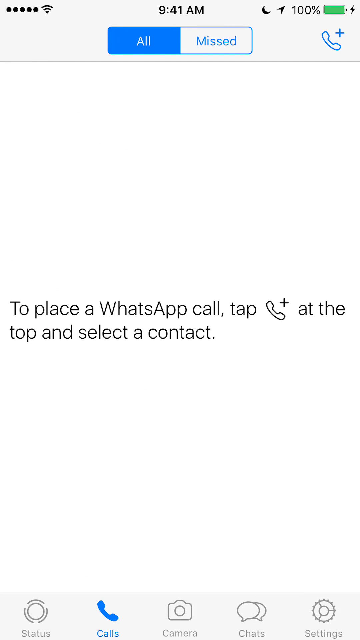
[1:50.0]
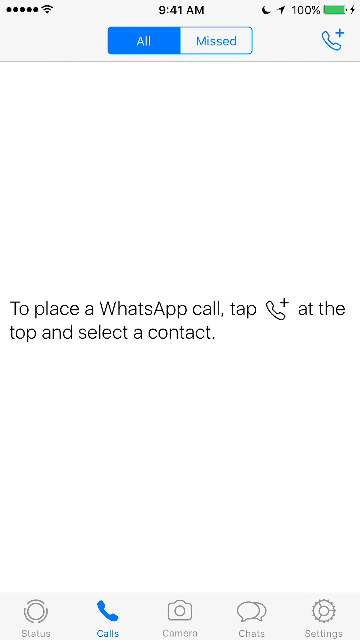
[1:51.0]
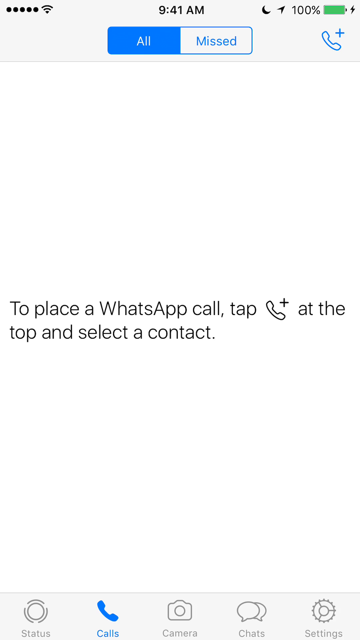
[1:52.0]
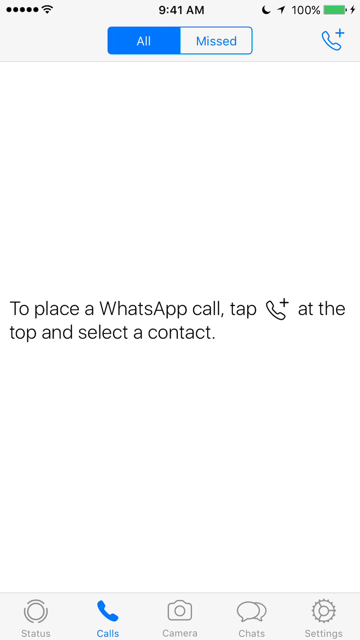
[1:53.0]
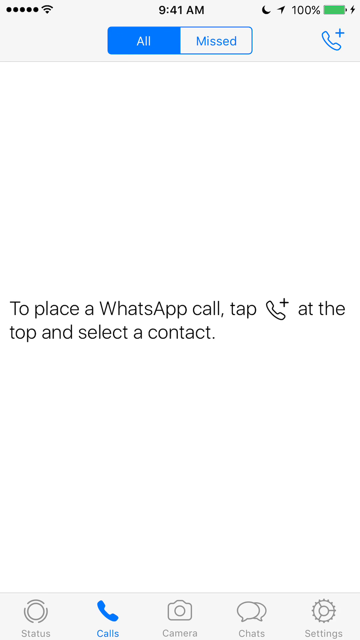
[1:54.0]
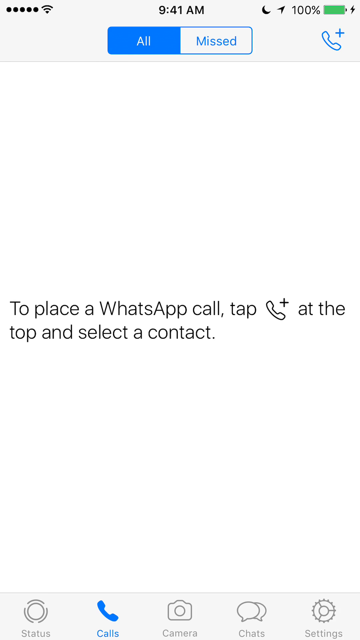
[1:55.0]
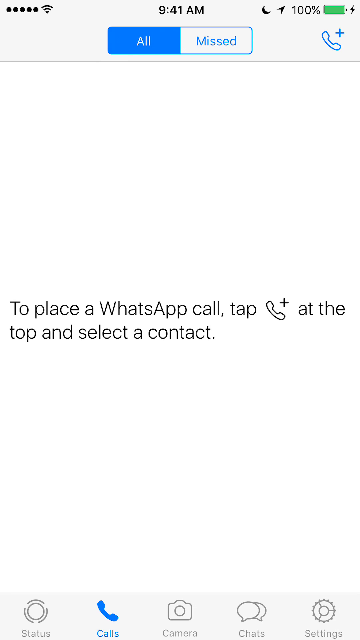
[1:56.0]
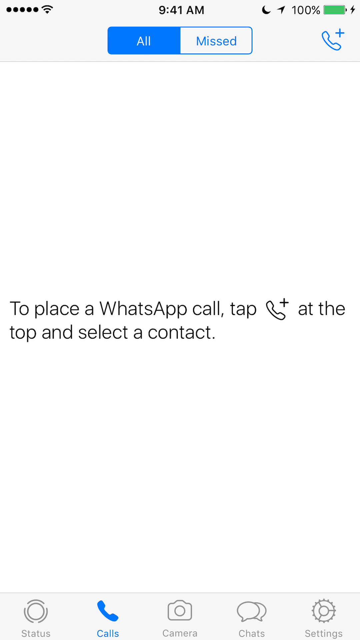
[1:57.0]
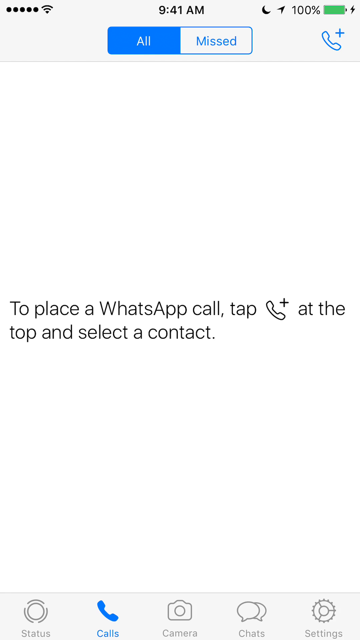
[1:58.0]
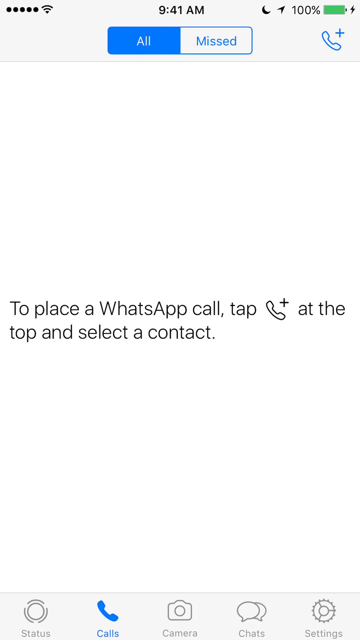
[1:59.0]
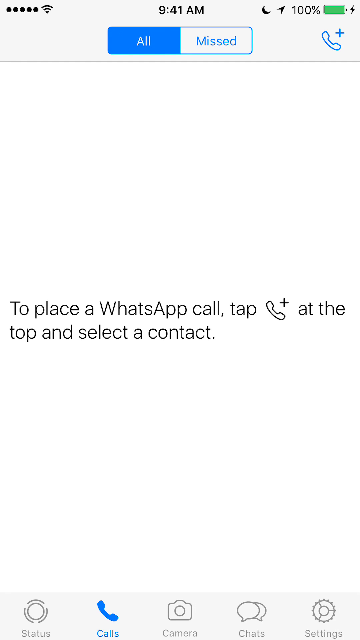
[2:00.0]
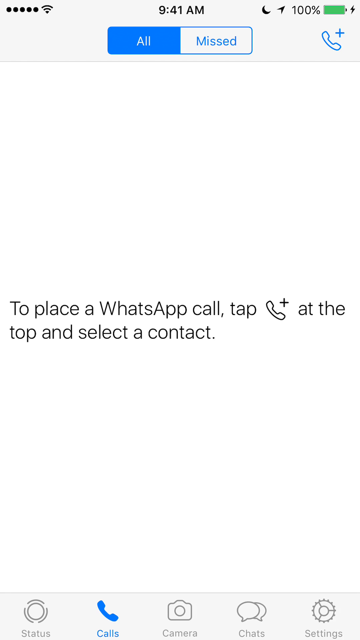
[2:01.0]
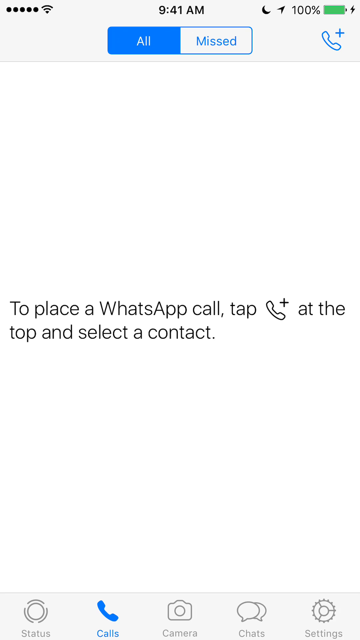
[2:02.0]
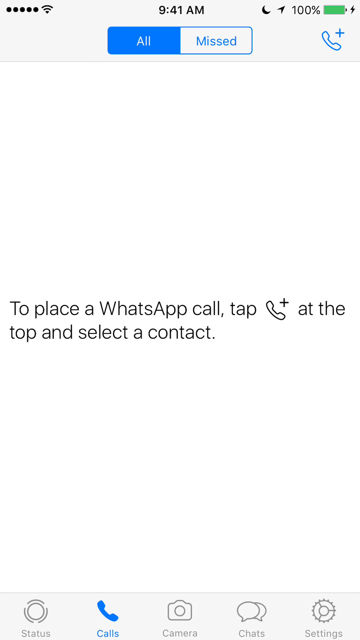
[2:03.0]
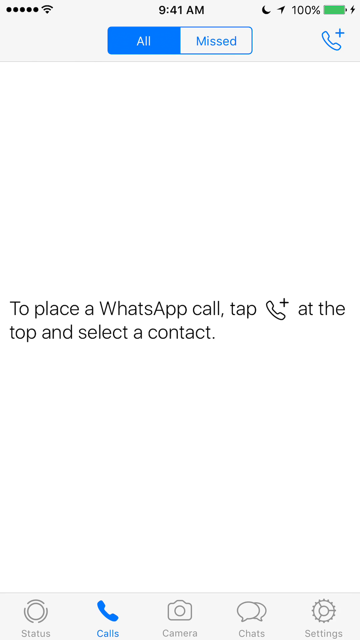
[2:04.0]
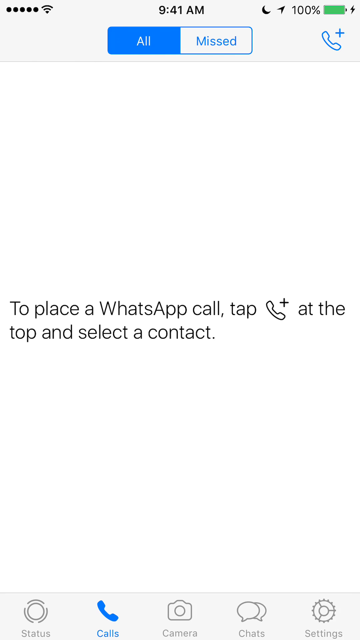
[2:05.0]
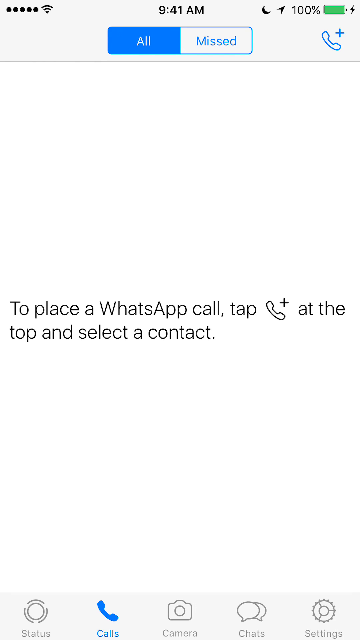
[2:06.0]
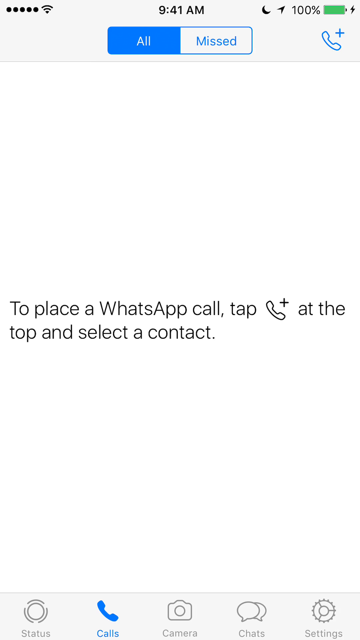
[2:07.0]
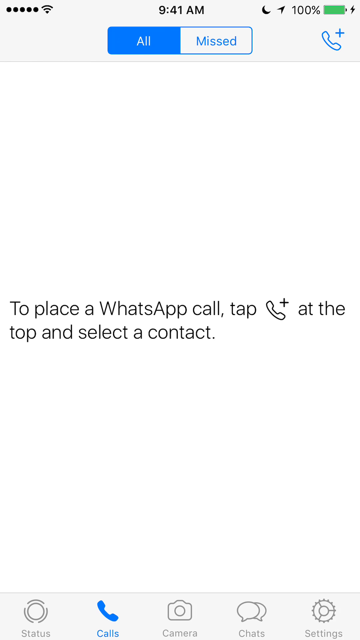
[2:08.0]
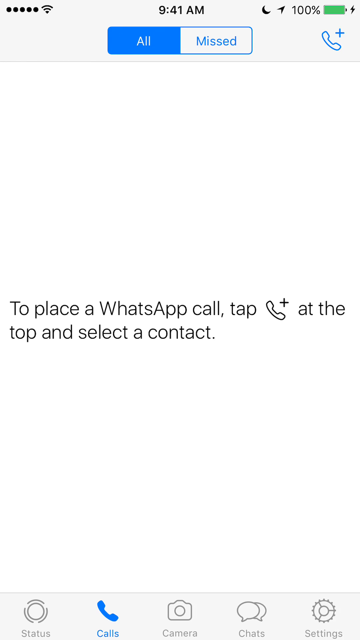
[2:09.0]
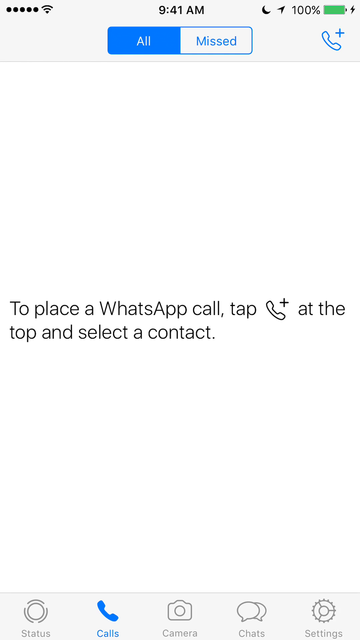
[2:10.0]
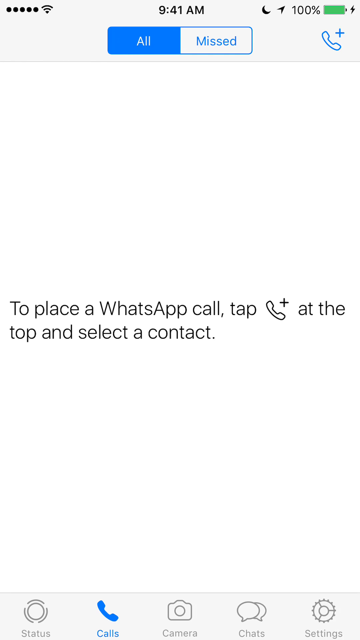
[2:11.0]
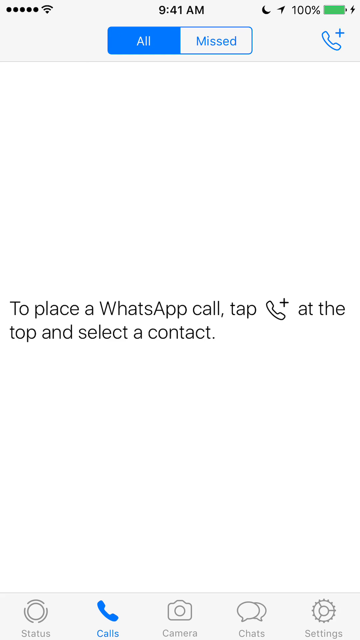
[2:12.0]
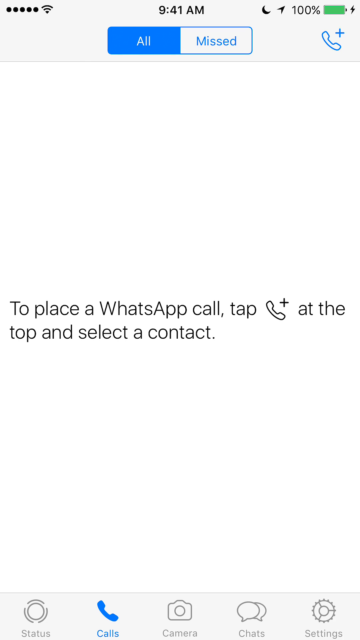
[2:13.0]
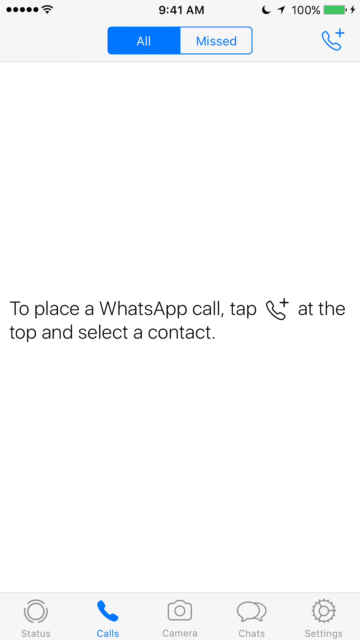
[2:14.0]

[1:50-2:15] A WhatsApp screen on an iPhone shows at the top a blue box with the word "ALL" in it, highlighted in blue, and to its right the word "MISSED" in a white box. Further right is a drawing of a blue phone with a plus at its upper right. At the top of the screen the battery is at 100% and the time is 9:41 AM; on the left side are five black dots followed by the Wi-Fi symbol. At the bottom of the screen, a small rectangular area holds icons: a camera in the middle, a drawing of a blue phone on the left, two messaging bubbles on the right, a settings icon drawn to look like a cog of a machine, and on the far left a circle with four curved outlines drawn around it. In the center is the sentence "to place a WhatsApp call. Tap phone plus at the top and select a contact." Everything else on the white background is blank, and the screen stays in view for several seconds.